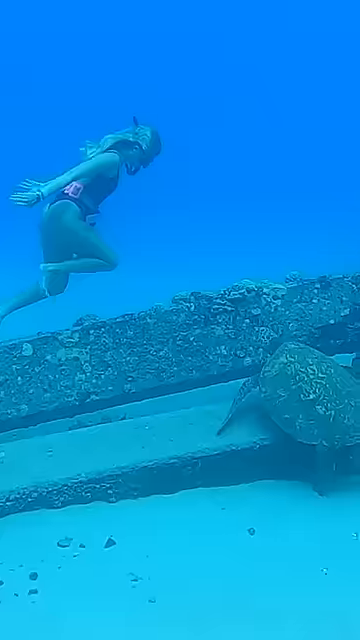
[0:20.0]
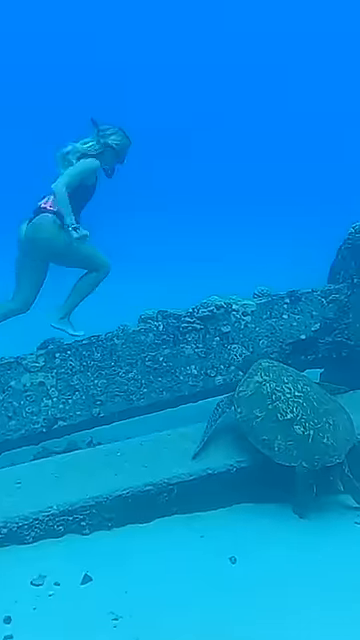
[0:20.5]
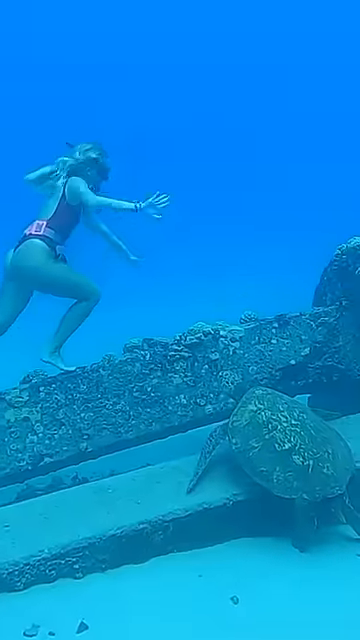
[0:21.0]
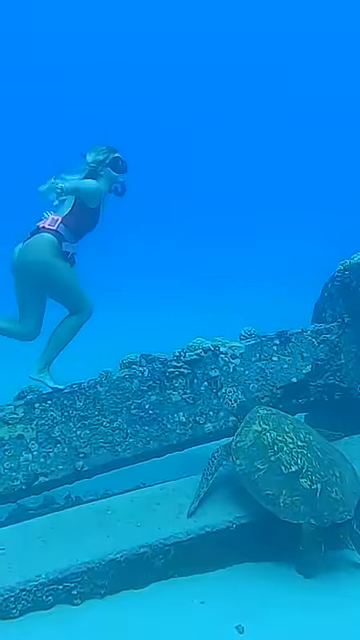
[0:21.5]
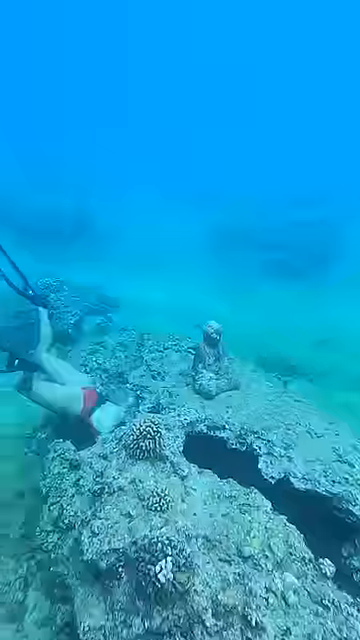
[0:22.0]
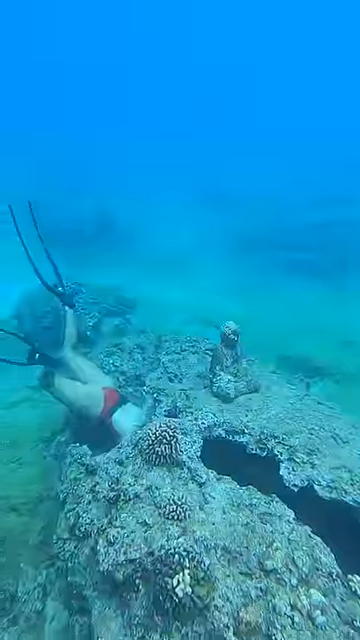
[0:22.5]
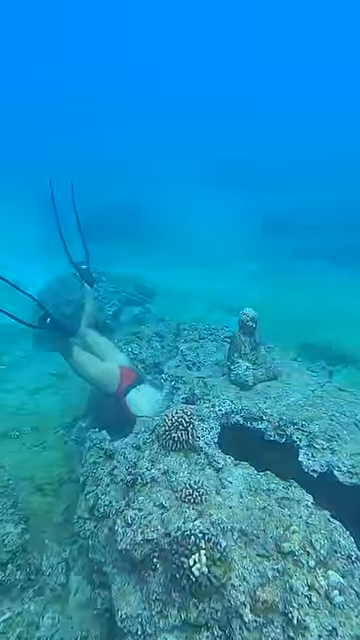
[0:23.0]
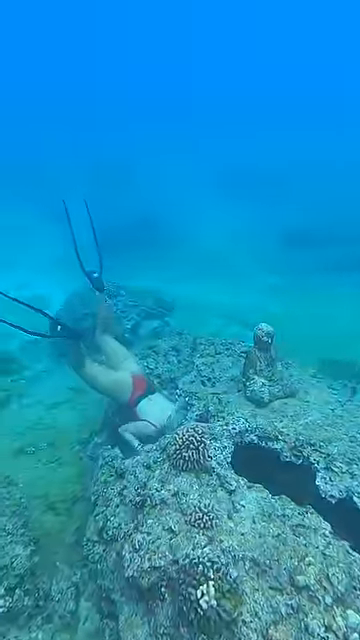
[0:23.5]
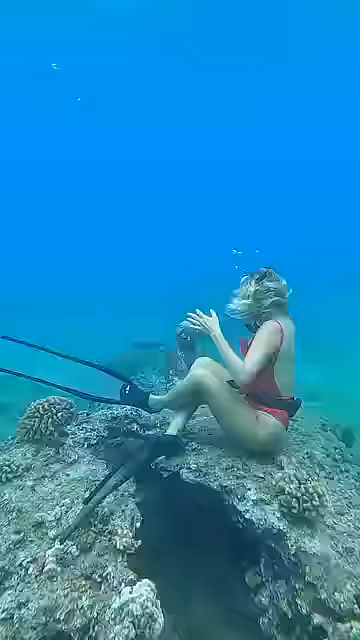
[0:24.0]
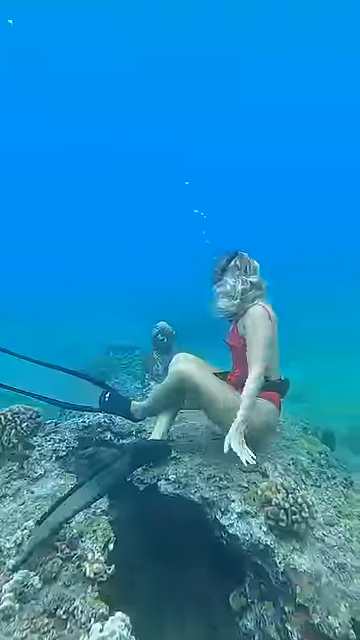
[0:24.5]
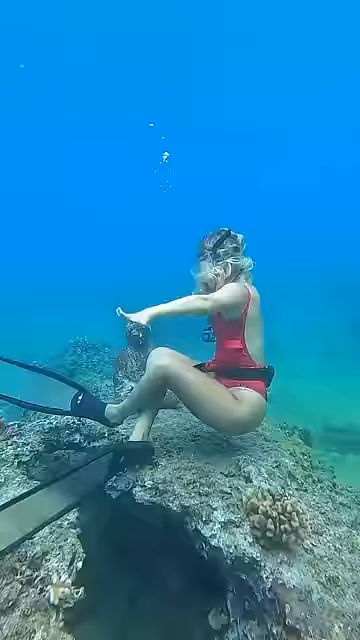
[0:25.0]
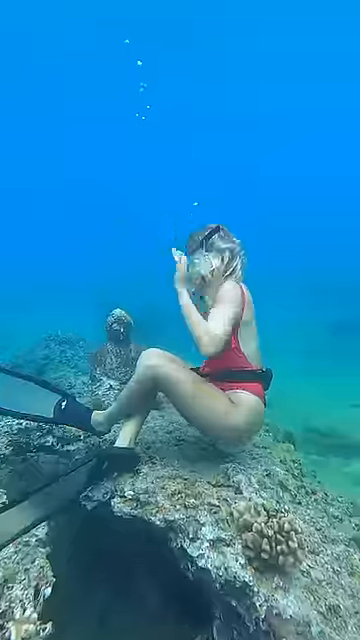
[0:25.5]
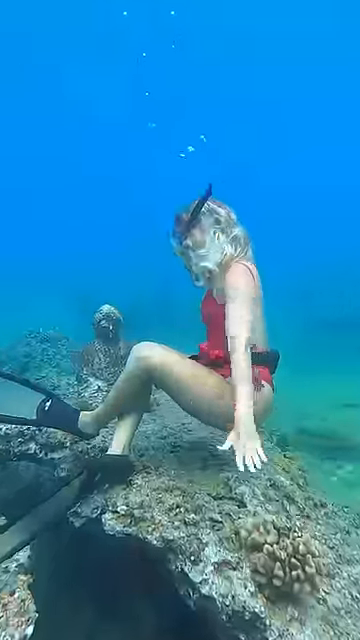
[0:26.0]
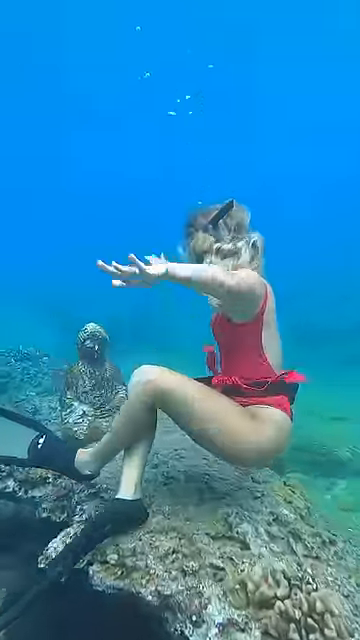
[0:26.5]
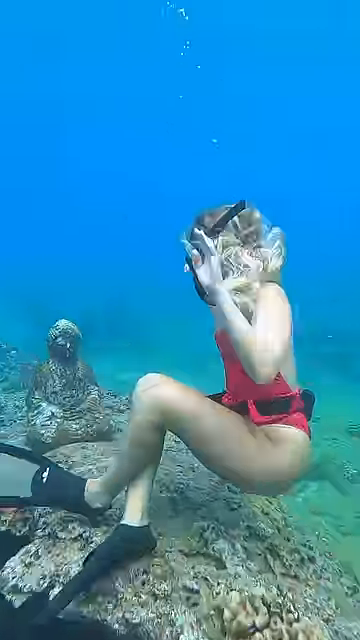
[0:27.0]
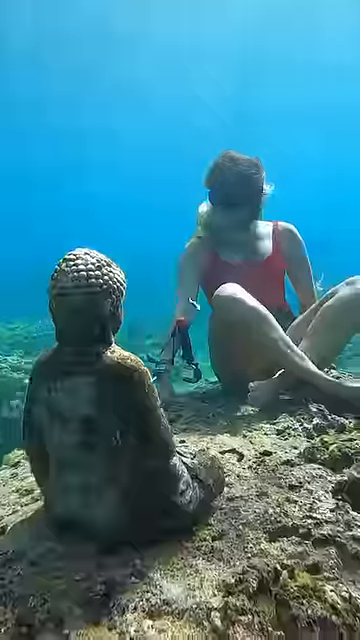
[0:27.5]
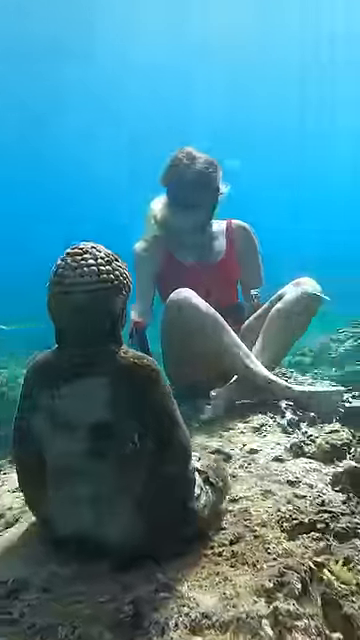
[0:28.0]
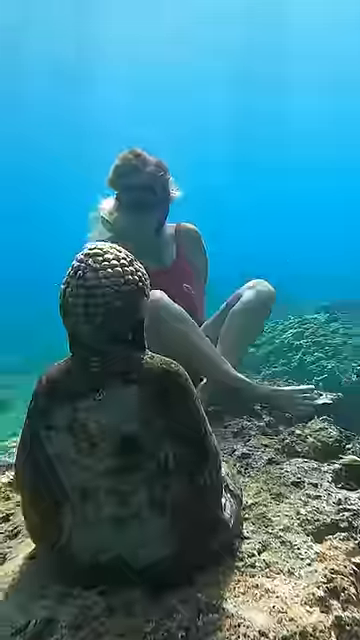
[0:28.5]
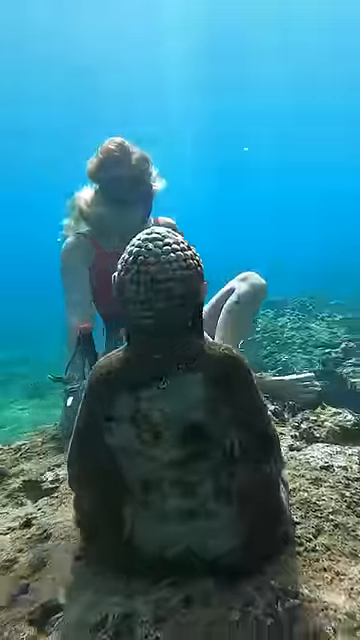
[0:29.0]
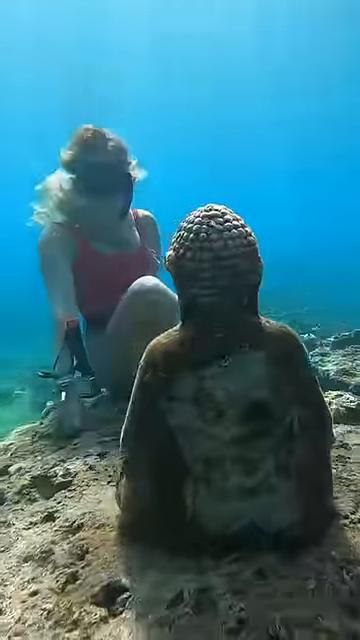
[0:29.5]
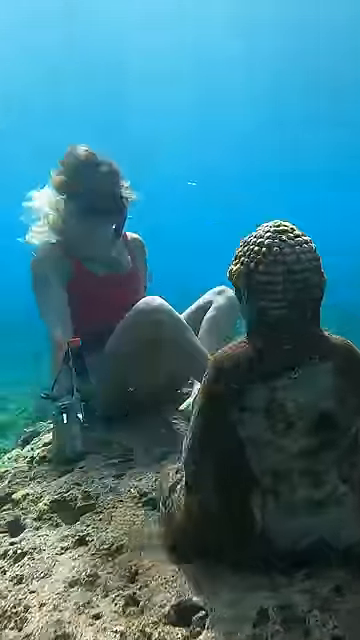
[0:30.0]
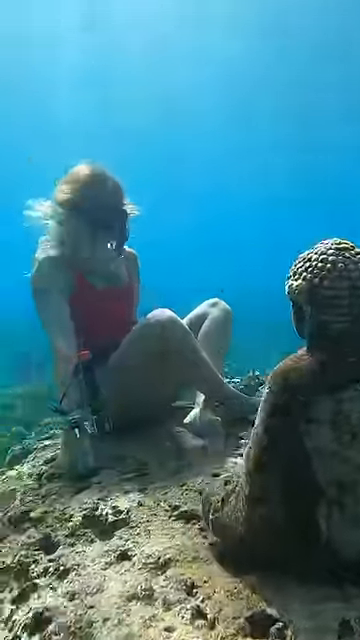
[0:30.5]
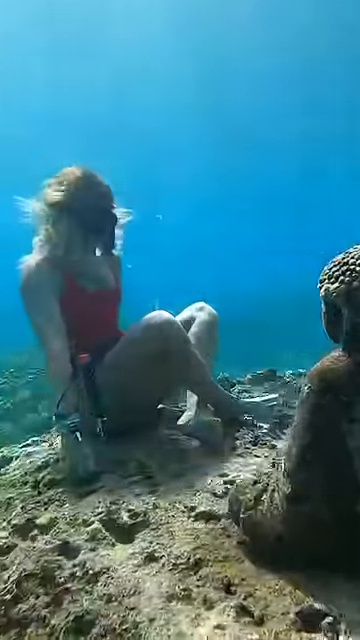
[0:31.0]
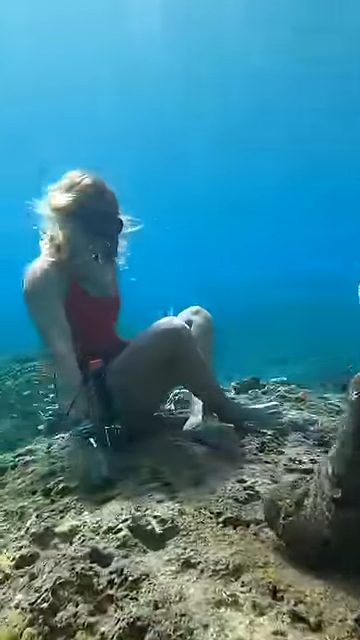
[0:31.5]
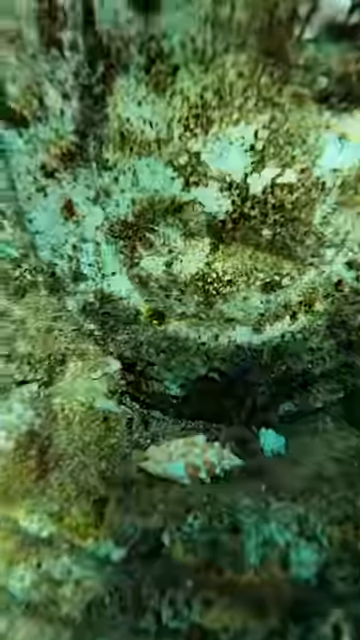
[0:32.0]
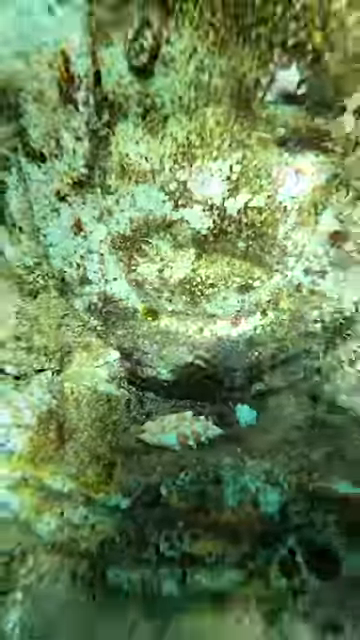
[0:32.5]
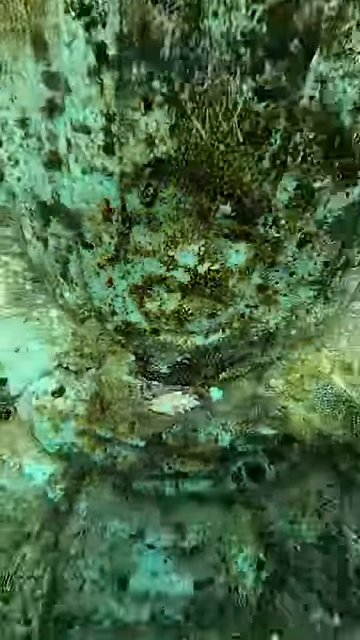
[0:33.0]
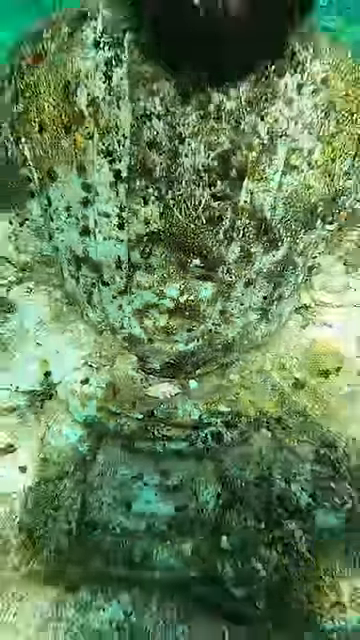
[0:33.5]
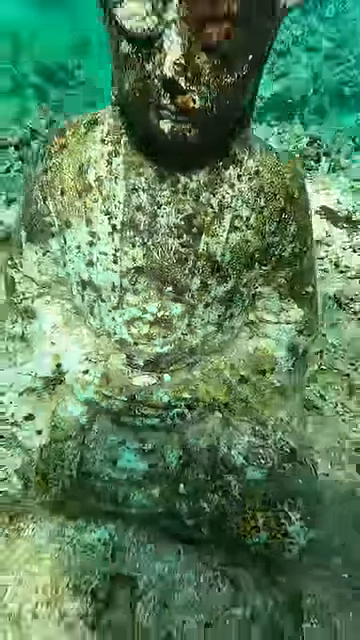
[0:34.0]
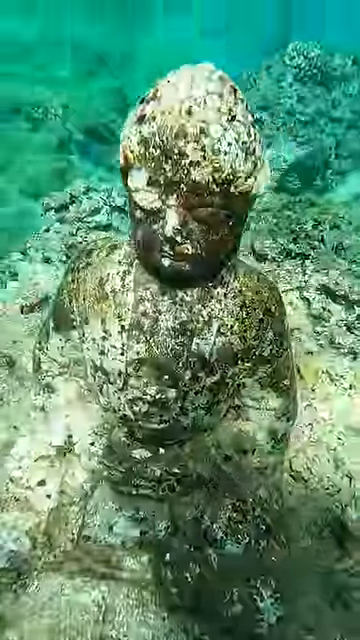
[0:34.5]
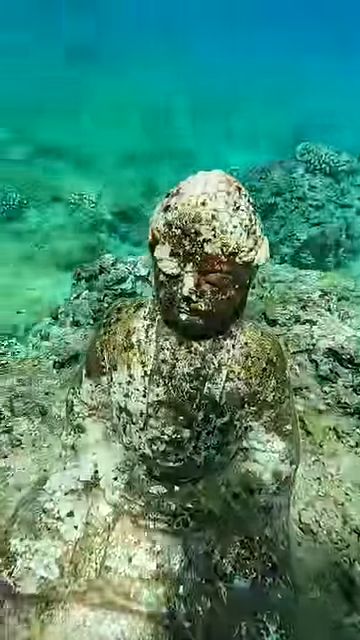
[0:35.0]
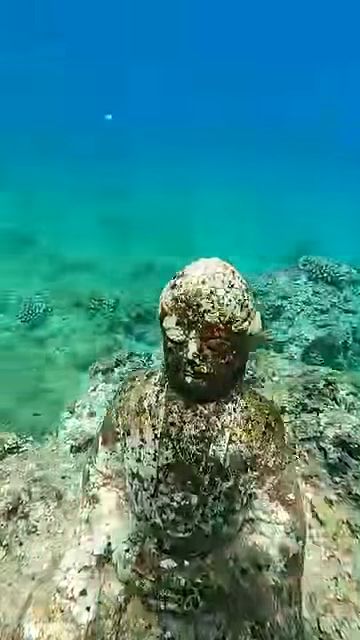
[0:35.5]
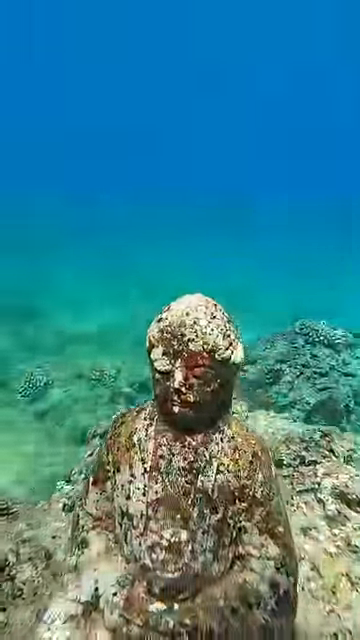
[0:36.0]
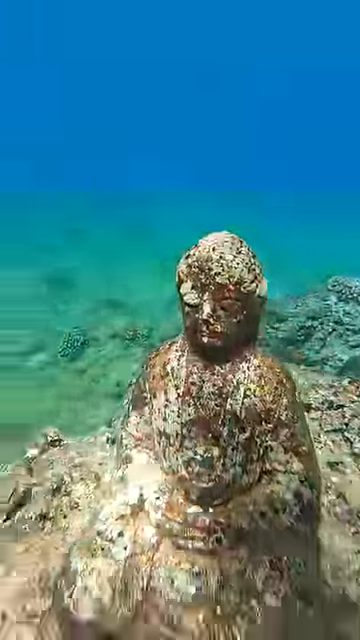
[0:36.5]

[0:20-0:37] Several divers are underwater. A woman in a pink swimsuit is on a large underwater structure that looks metallic, with a sea tortoise right next to the structure. The woman walks on the structure very slowly, then the video switches to another woman, of whom only her small red shorts can be seen as she dives under a rock. The rock has what look like small sea anemones on it, with some red or pink parts. A rock formation or statue is on the rock above her. The shot cuts a little closer: the woman is in a red swimsuit and sits just above the rock. As she floats by, the camera moves over and the rock formation turns out to be a Buddhist statue. A reverse shot shows the back of the statue as she sits cross-legged looking at it, and the camera pans around a little. The video then cuts to a close-up of the statue's belly and zooms out to show the statue.